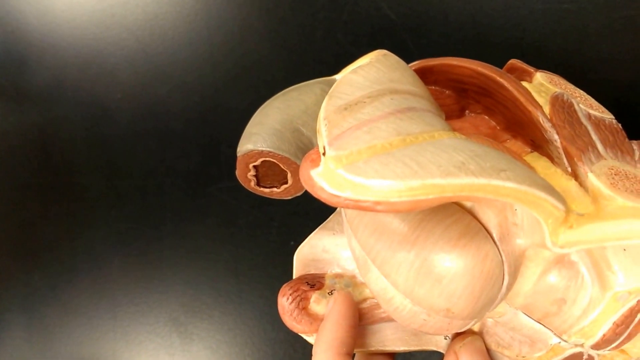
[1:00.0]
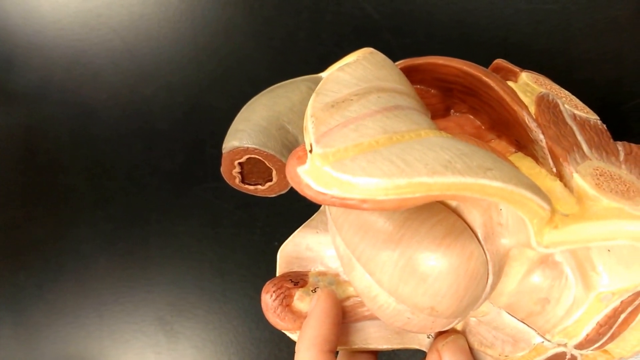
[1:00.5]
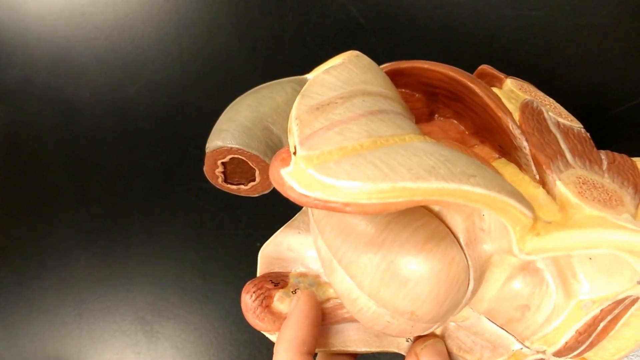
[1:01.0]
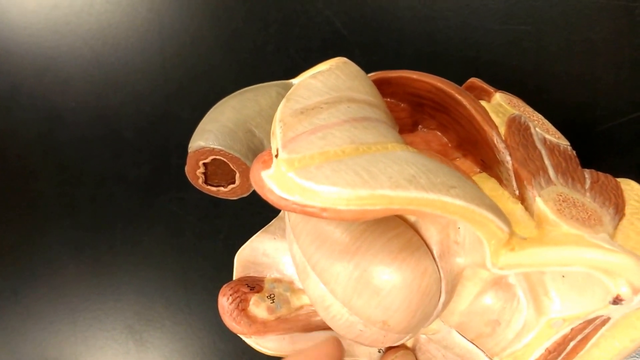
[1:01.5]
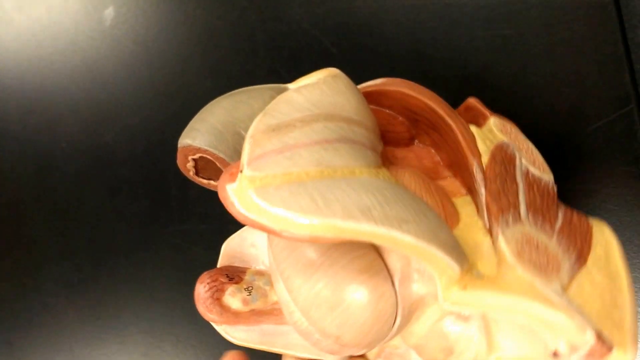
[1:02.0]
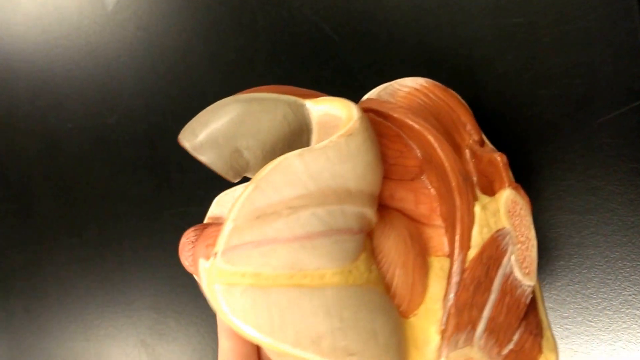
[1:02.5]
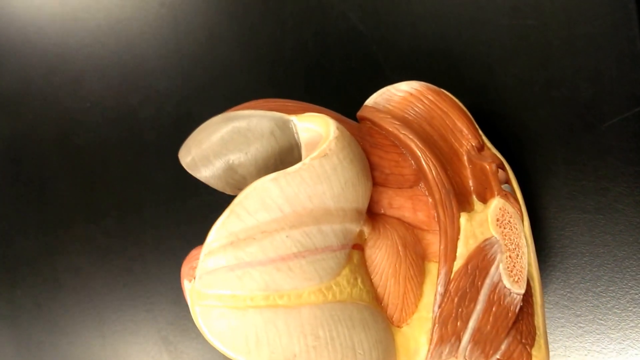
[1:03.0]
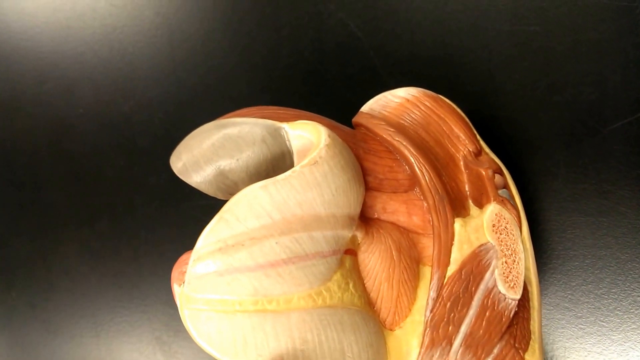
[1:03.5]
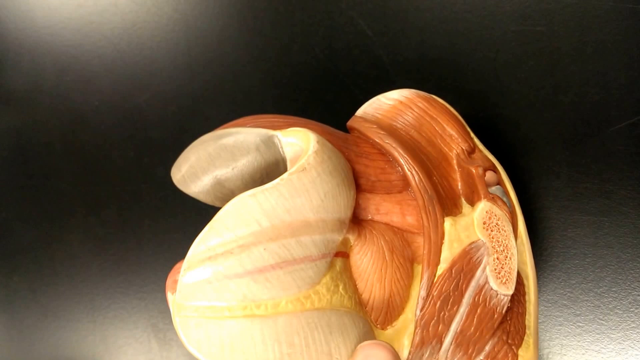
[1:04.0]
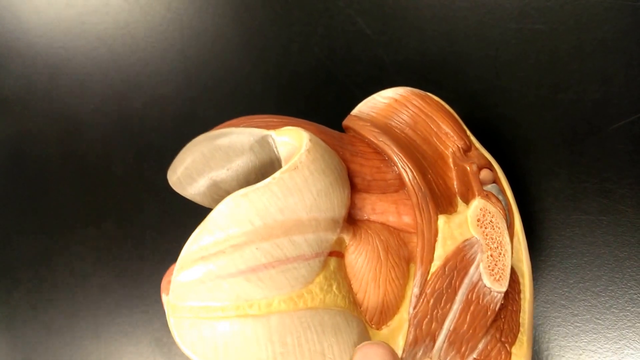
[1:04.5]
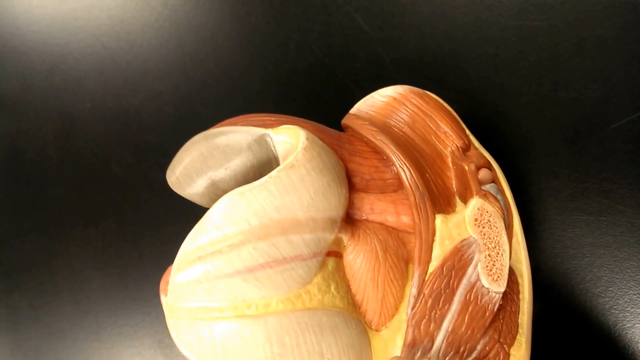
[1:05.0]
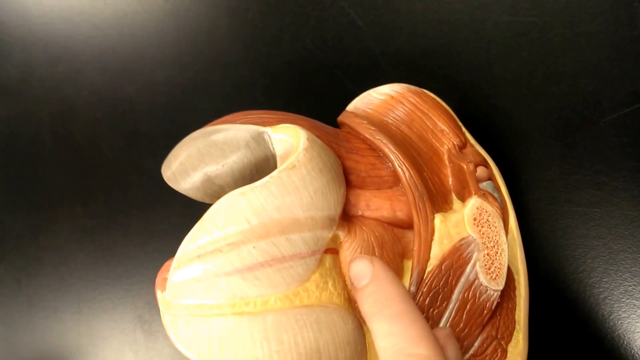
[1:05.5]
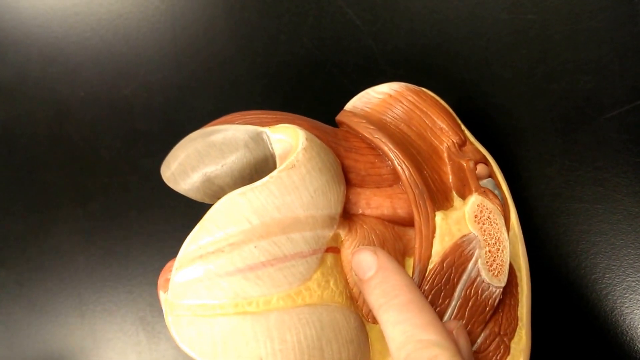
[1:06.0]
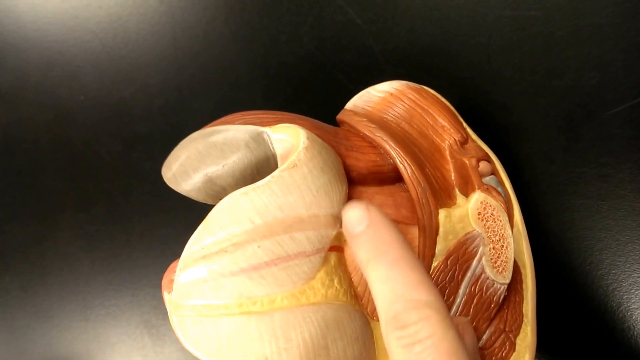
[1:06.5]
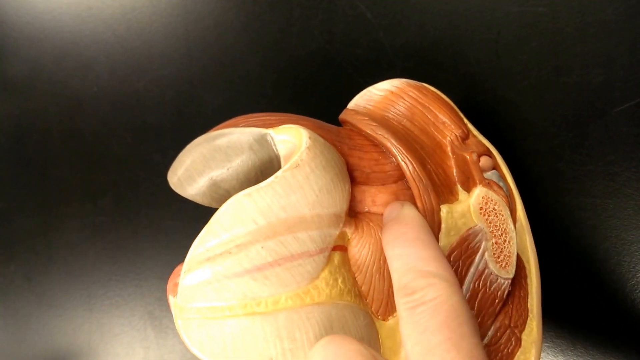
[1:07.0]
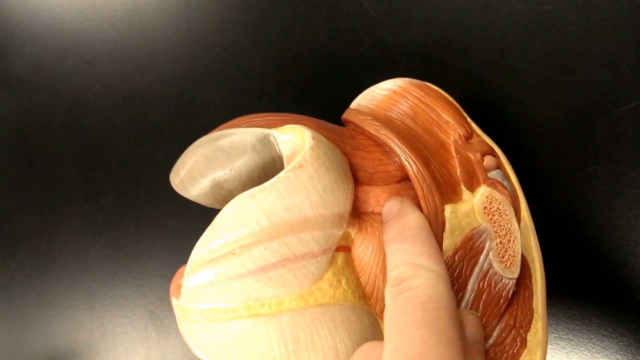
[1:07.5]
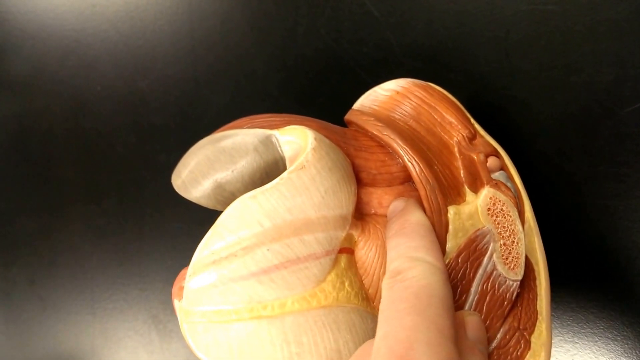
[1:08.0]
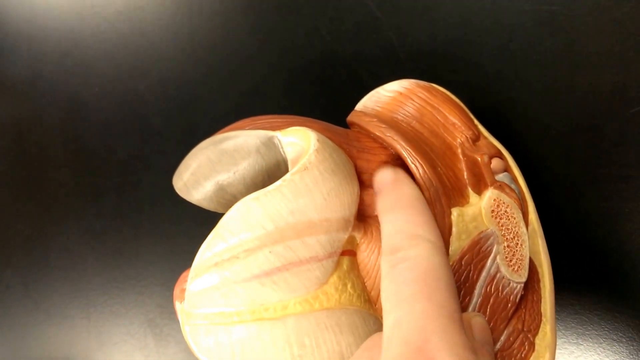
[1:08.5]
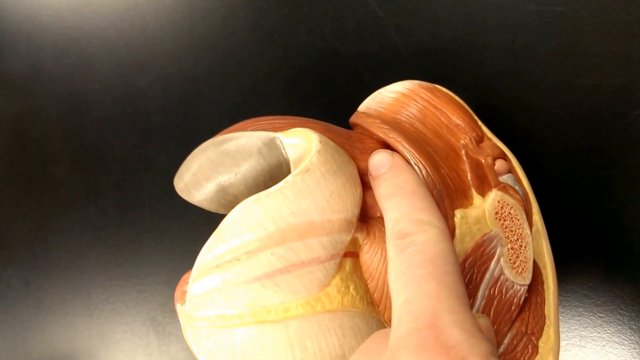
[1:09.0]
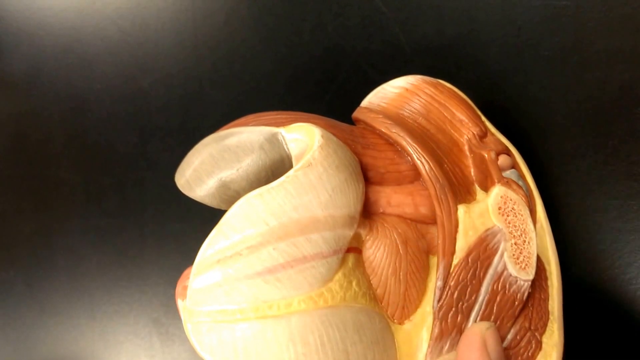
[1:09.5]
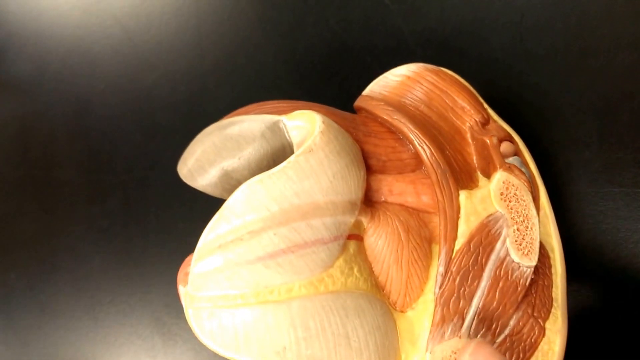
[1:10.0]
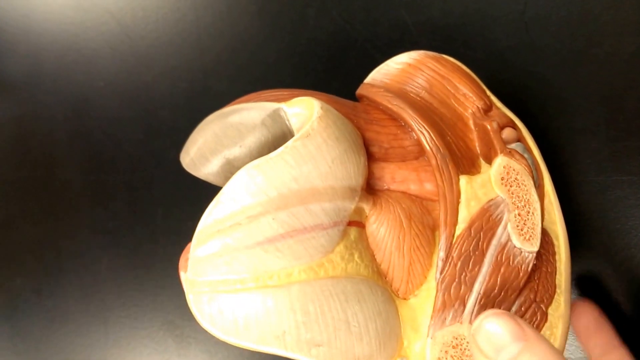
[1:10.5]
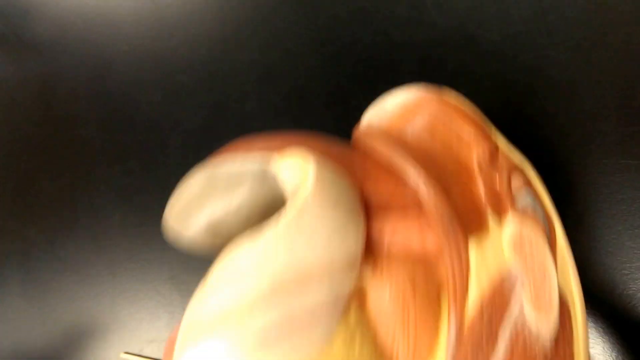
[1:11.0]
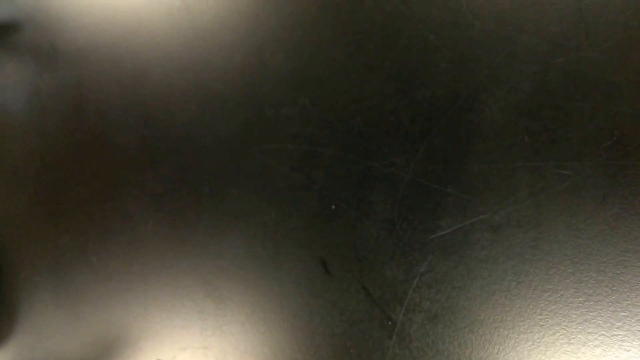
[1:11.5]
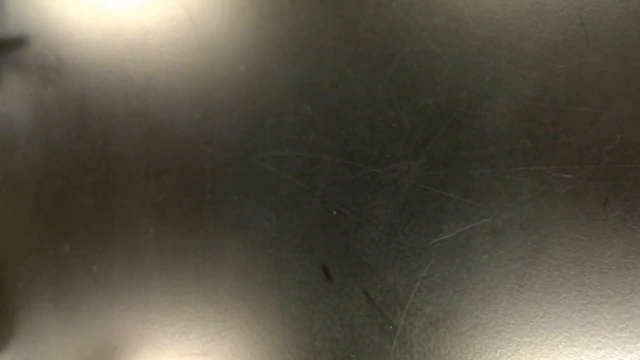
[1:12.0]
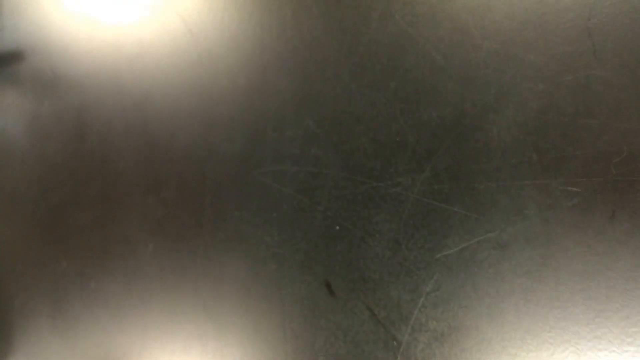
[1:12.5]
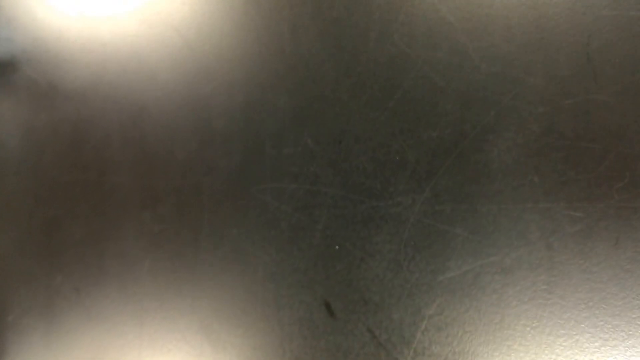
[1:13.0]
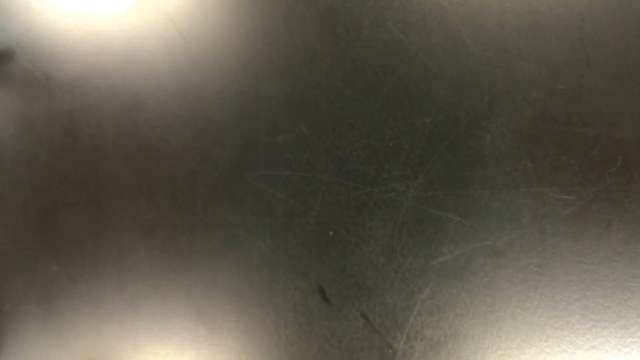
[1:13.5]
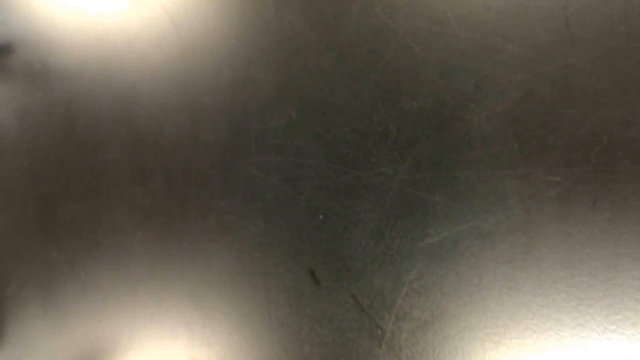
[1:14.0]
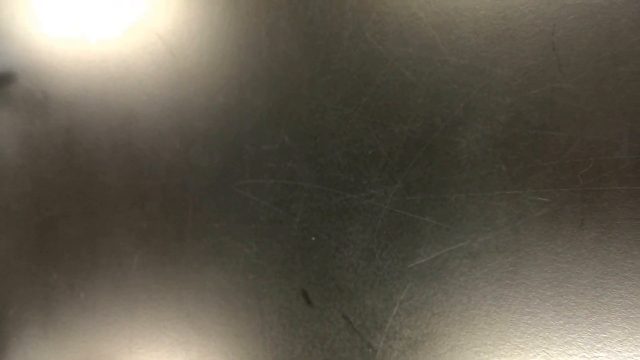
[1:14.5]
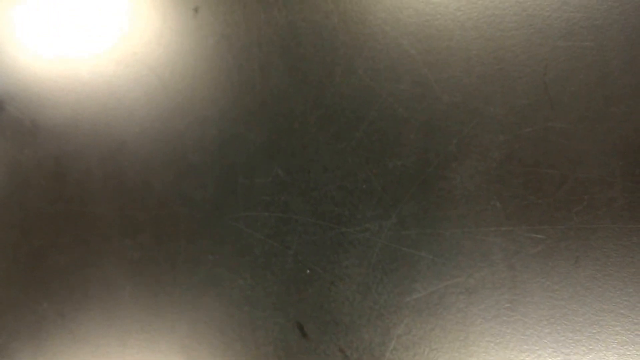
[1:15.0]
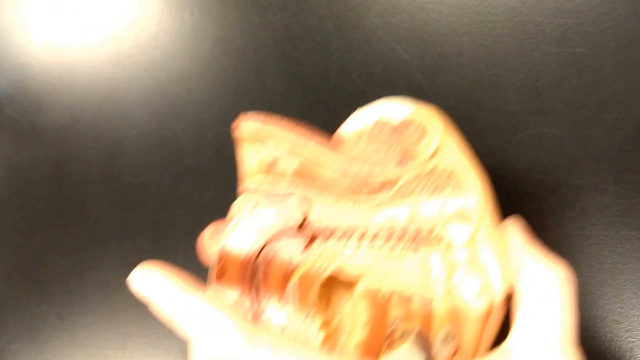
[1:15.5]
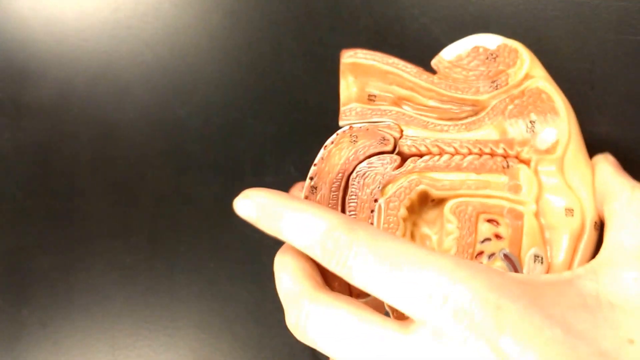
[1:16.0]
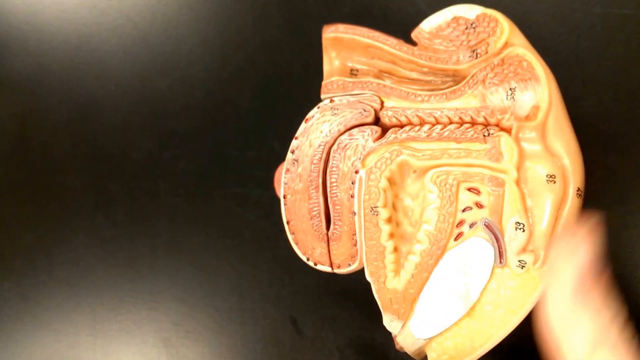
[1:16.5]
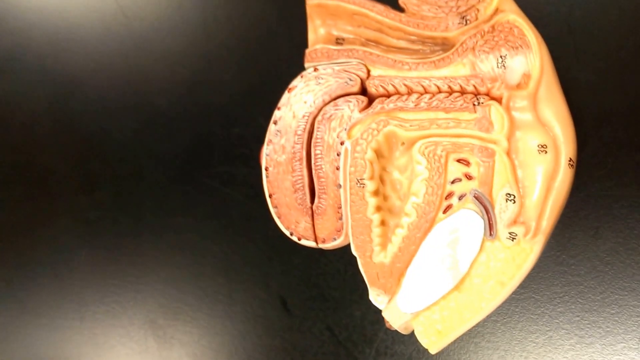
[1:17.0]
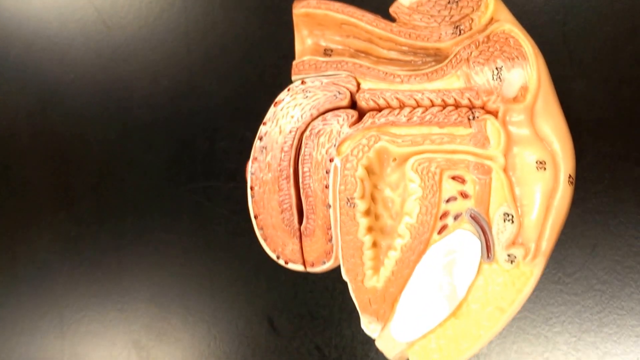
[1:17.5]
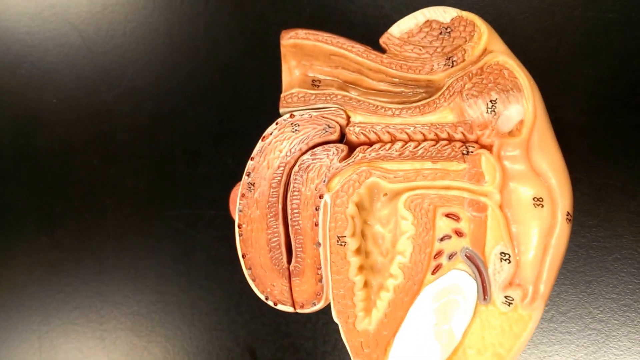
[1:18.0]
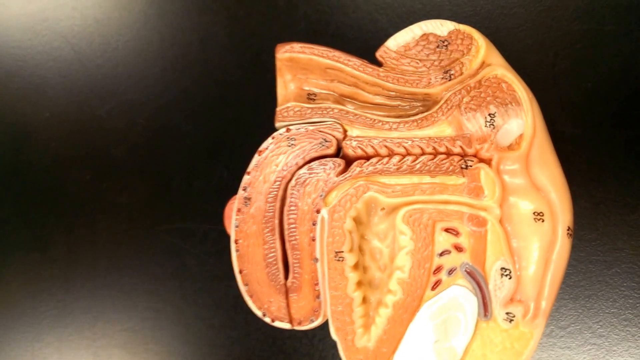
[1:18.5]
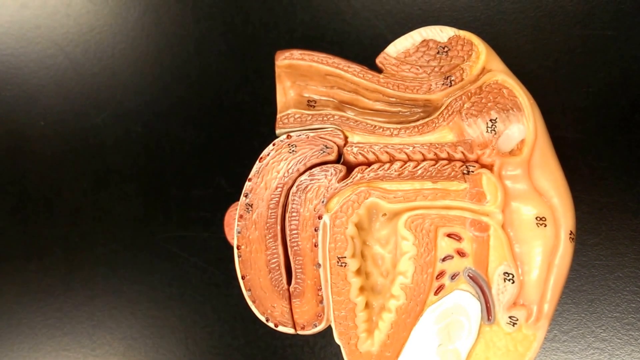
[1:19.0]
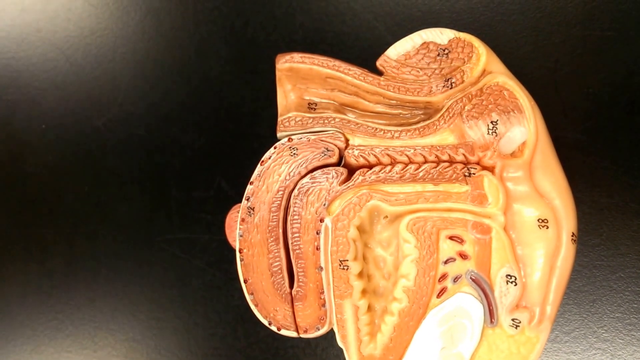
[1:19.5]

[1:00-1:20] Someone holds a plastic model of a human vagina and reproductive system in their left hand, showing the back side, then slowly turns it toward the left to show a large mass of muscles and structures just under the skin. They point to a section where there seem to be large amounts of connective tissue. They then seemingly pull the model apart, revealing a dissection of the model with a side view of the various structures inside. The model has various holes and tunnels and shows different muscle masses, as well as a fine layer of skin and fat on one side, and various numbers label different structures inside it. The person pans the camera up toward the top of the model, then grabs a wooden stick and points it toward the center of the model.